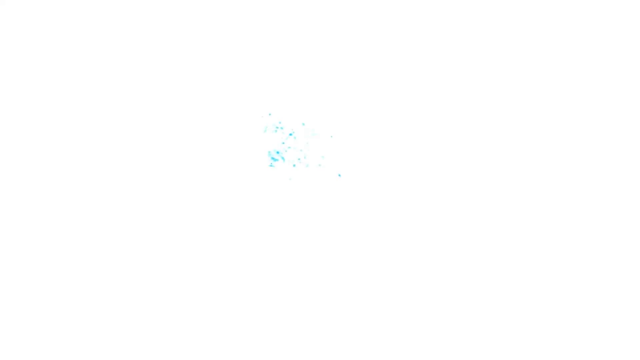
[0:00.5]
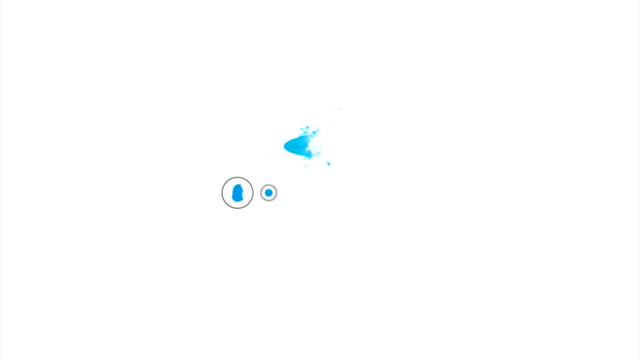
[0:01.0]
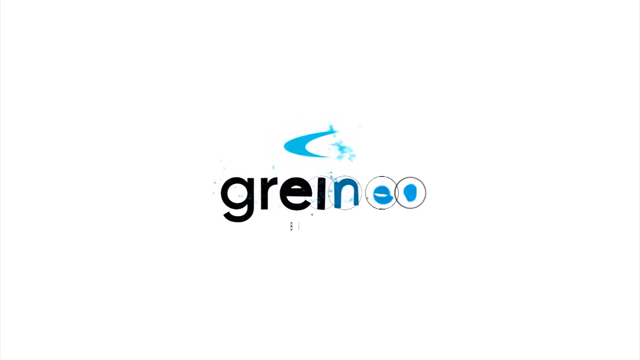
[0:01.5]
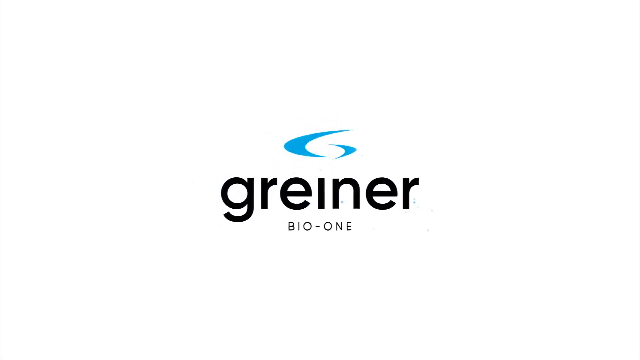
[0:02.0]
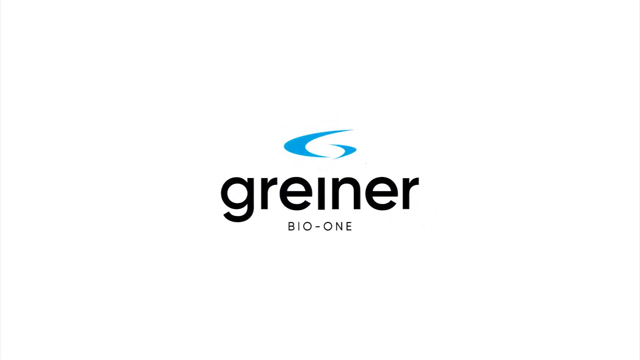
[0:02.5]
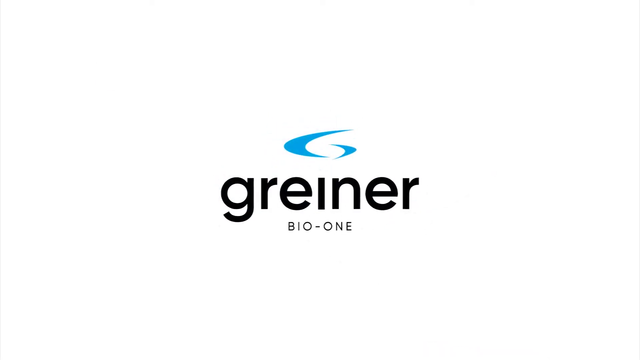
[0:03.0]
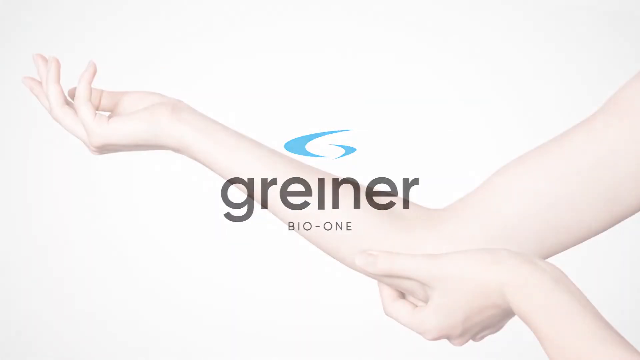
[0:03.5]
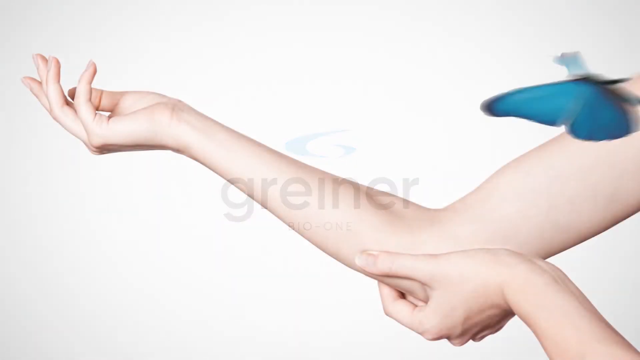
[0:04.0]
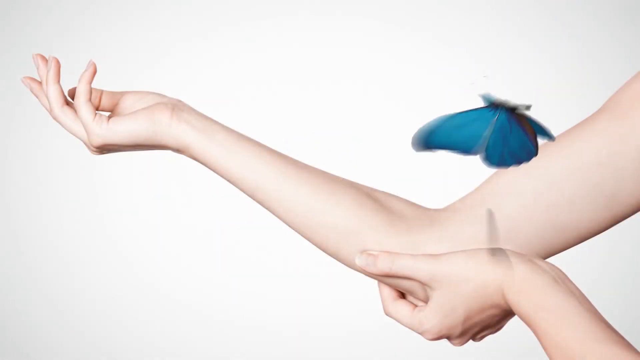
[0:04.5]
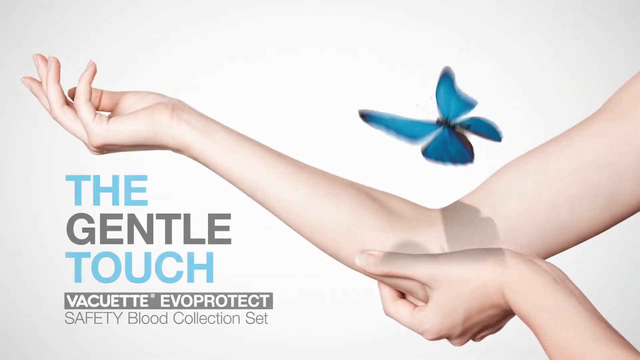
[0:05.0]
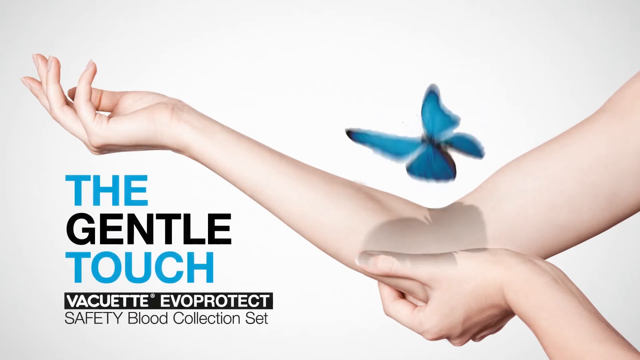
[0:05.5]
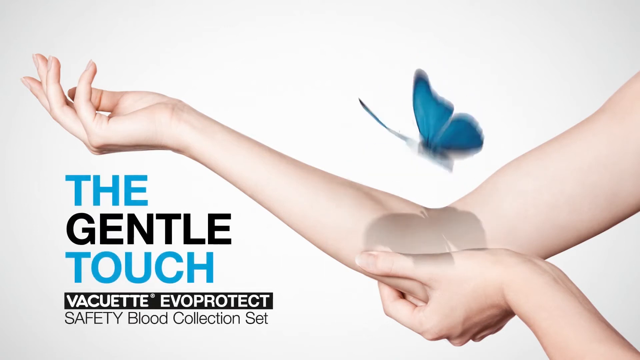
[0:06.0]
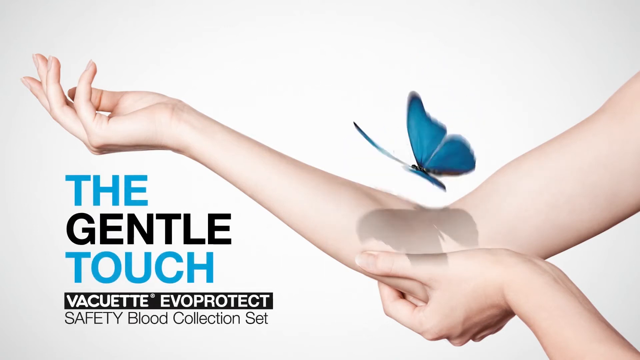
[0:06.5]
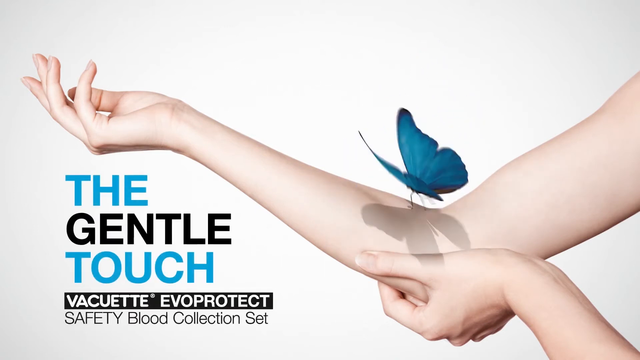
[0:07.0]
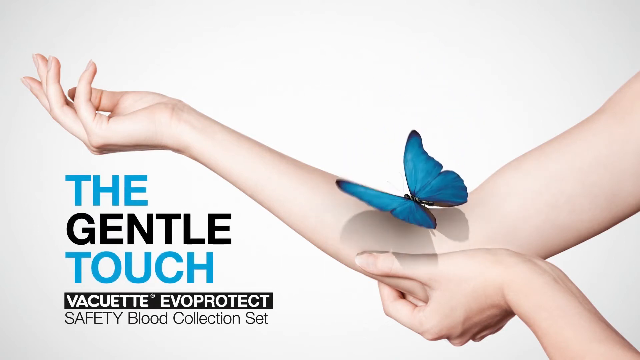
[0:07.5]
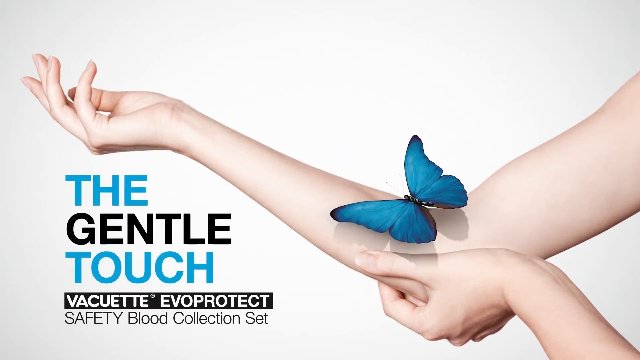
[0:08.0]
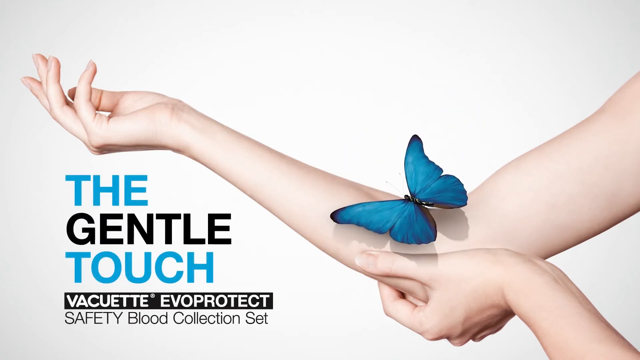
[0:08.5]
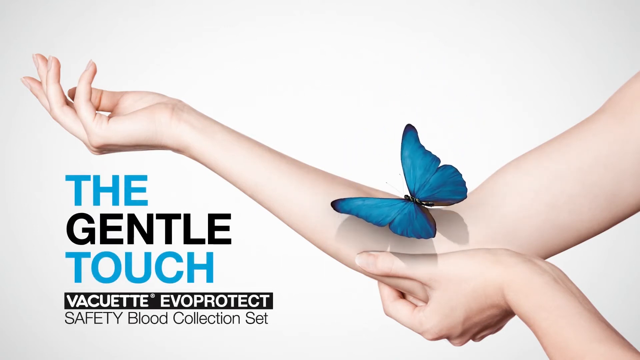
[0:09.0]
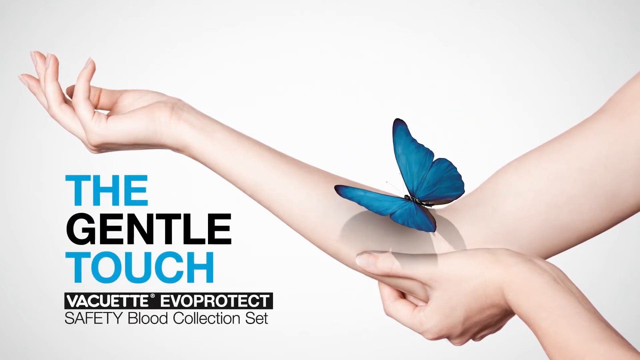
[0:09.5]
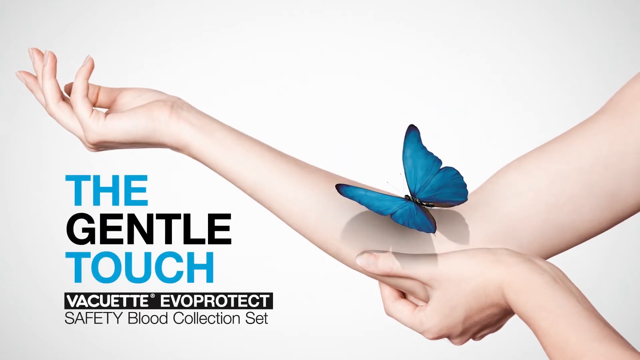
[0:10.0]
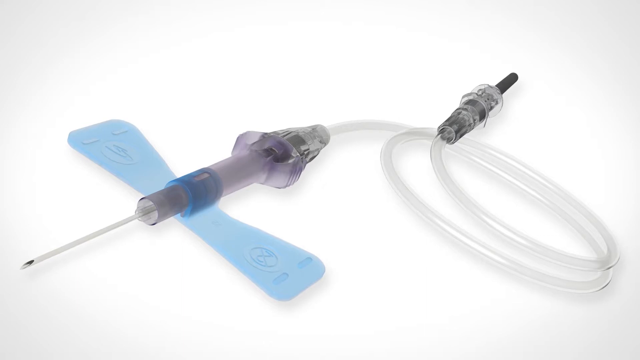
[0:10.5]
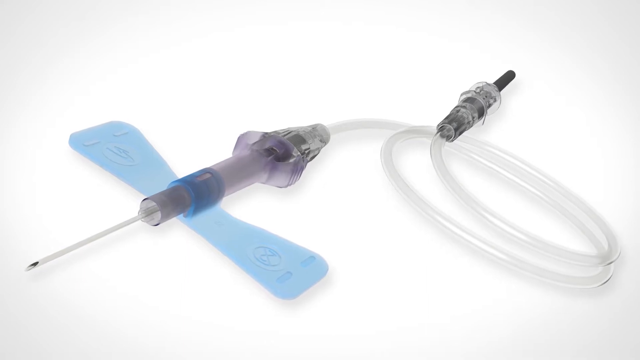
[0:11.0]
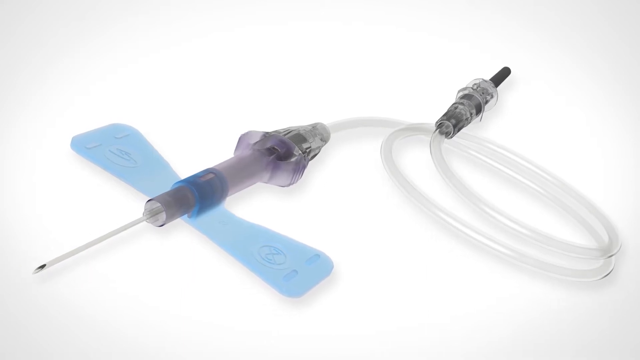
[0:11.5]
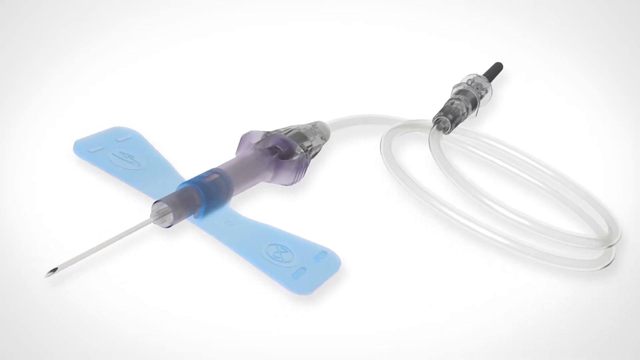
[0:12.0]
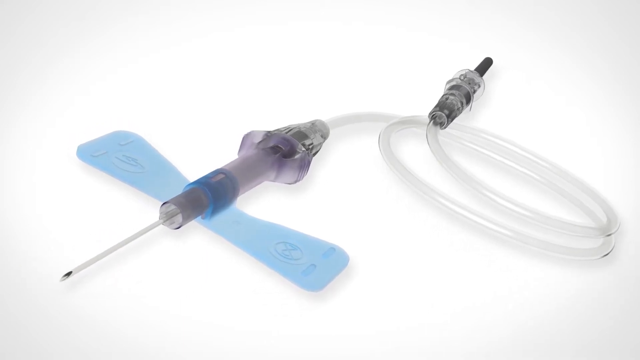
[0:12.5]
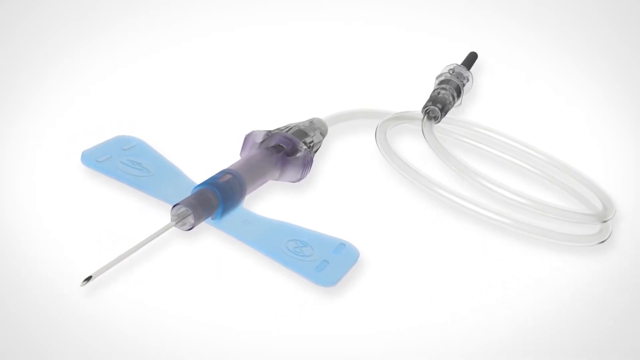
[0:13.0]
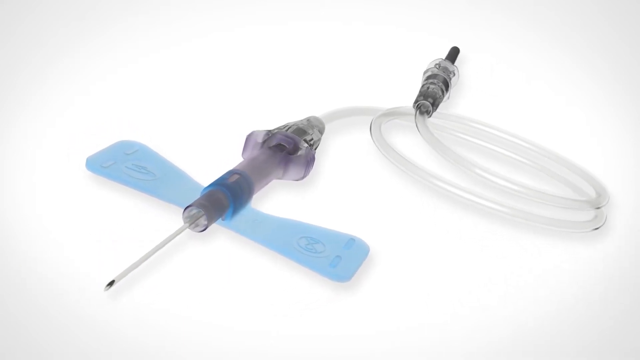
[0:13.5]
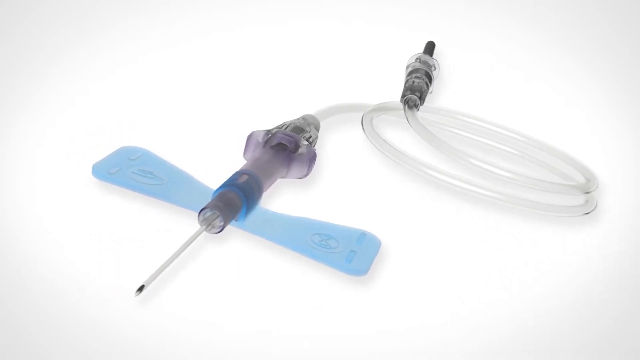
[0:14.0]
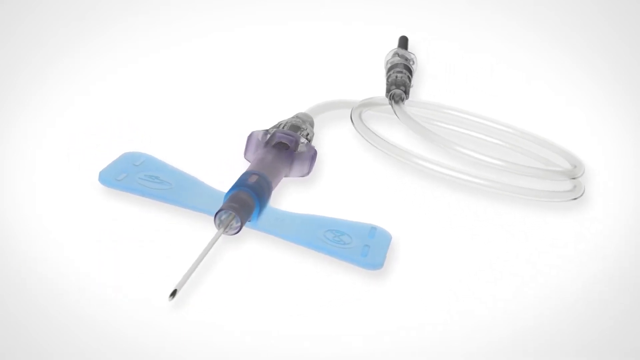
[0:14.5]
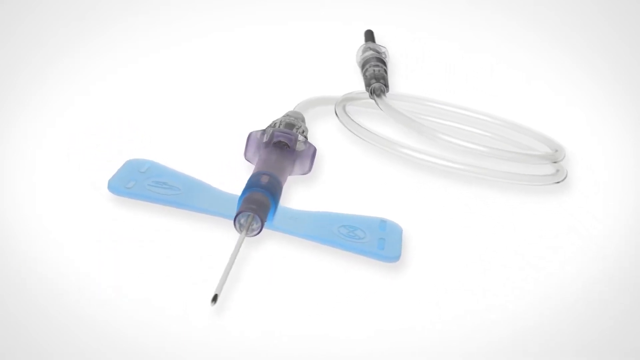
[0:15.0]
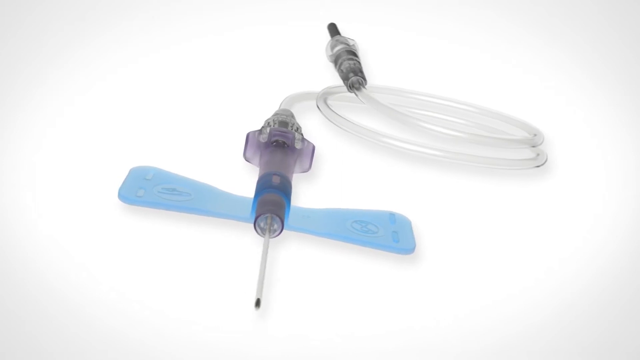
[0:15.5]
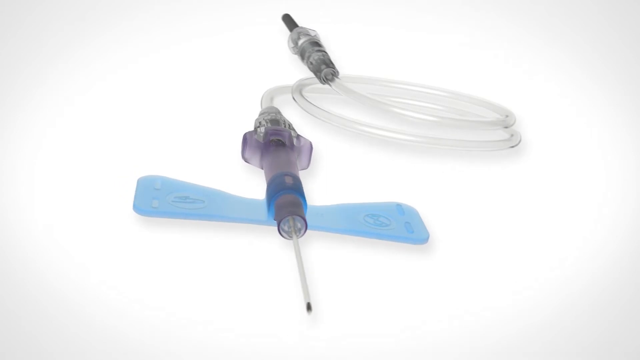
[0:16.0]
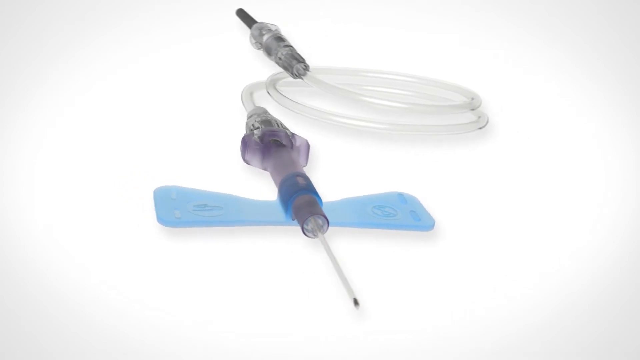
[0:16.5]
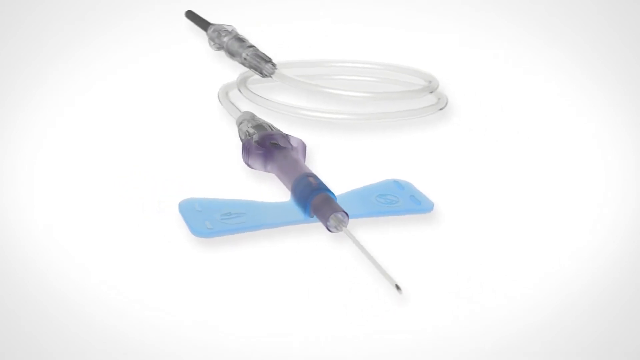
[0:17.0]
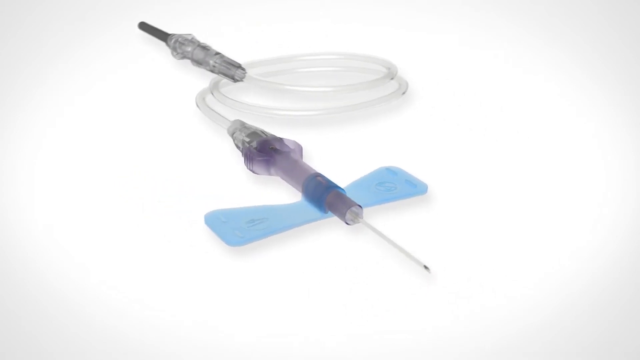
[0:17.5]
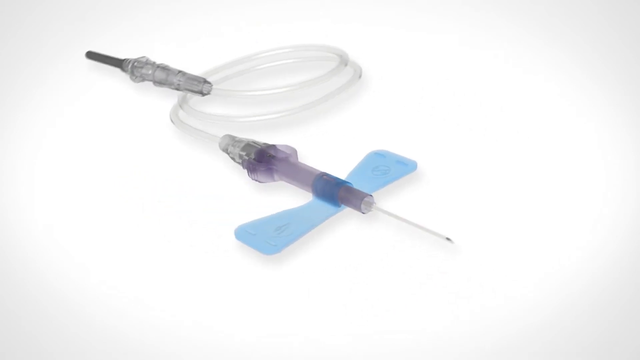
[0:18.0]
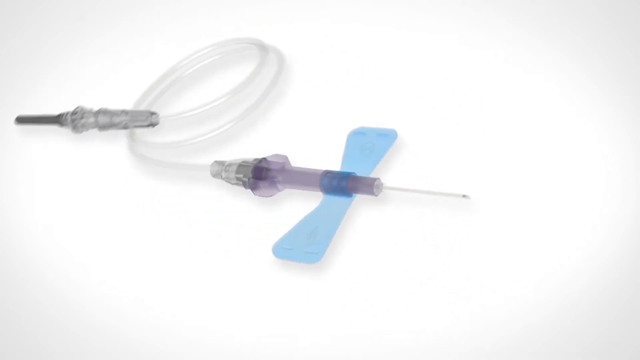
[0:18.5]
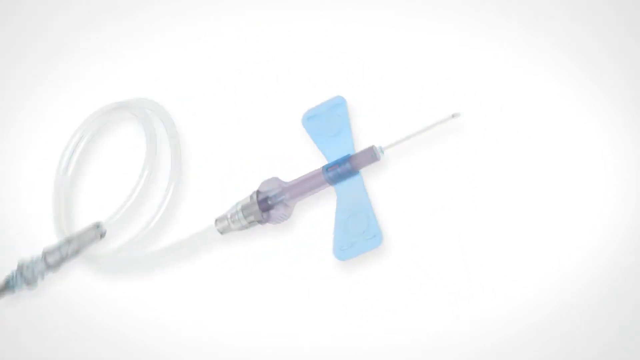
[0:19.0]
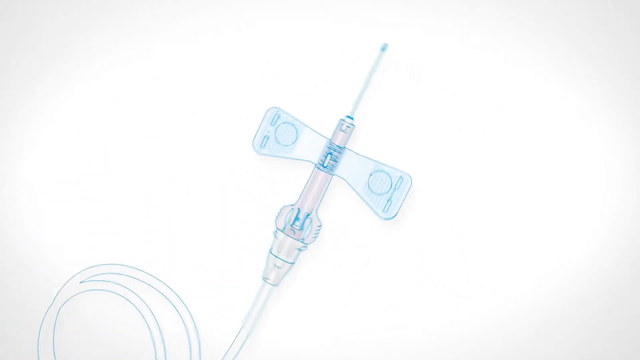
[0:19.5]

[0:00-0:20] The video appears to be an advertisement for a company called Griner Bio One. The word "Griner" appears in small letters in the middle of the screen, with "Bio One" in capital letters below it, and above "Griner" is a logo of two blue crescents. After this fades, a new screen shows a lady's arm: her right arm is extended outwards and bent slightly upwards at the elbow, and her left hand is underneath her right elbow. A caption on the screen says "the gentle touch," with "the" in blue, "gentle" in black and "touch" in blue, and below that it says "vacuette EVO protect safety blood collection set." The only motion on this screen is an aquamarine-colored butterfly landing on the lady's right elbow. Next comes a short shot of a syringe with a tube coming out of the bottom of it.